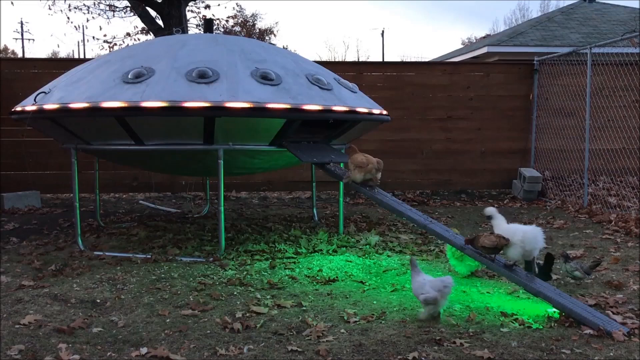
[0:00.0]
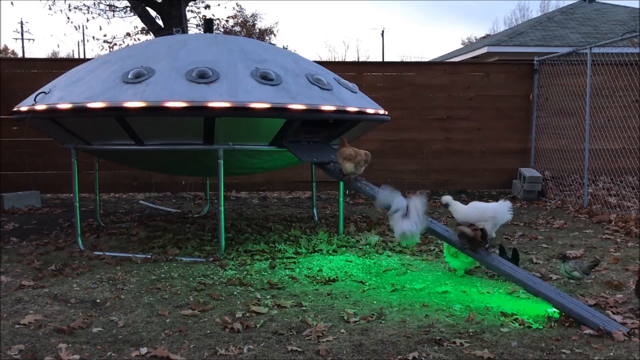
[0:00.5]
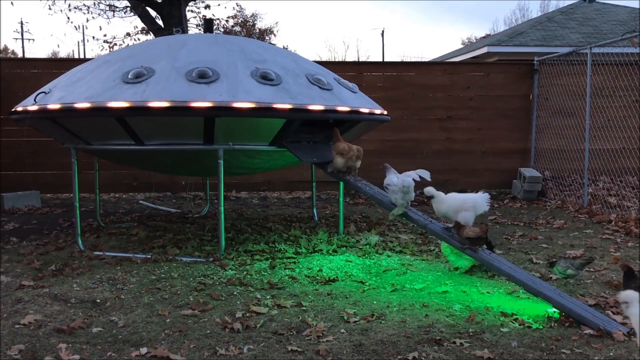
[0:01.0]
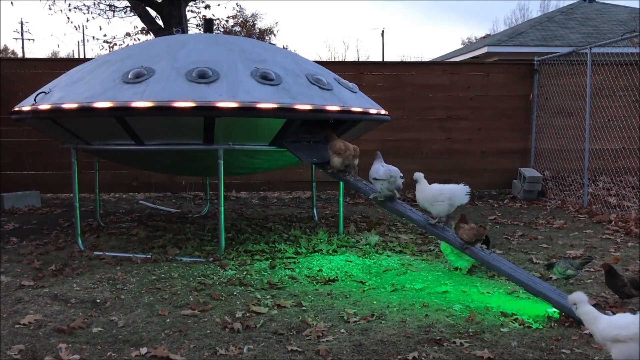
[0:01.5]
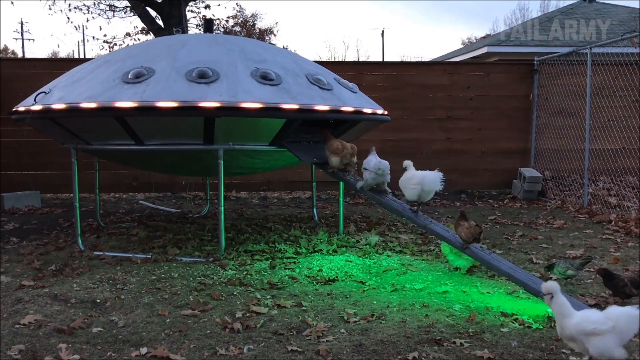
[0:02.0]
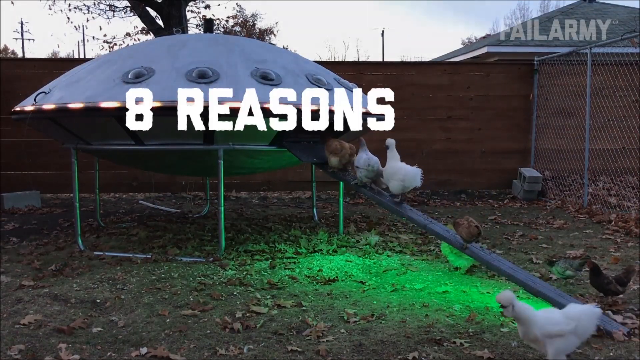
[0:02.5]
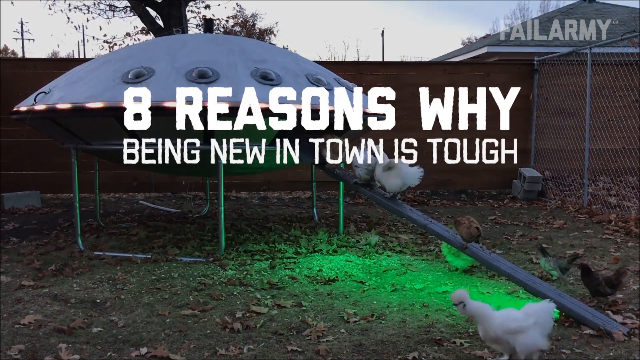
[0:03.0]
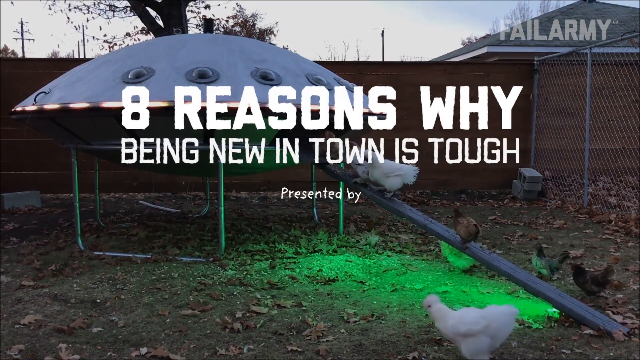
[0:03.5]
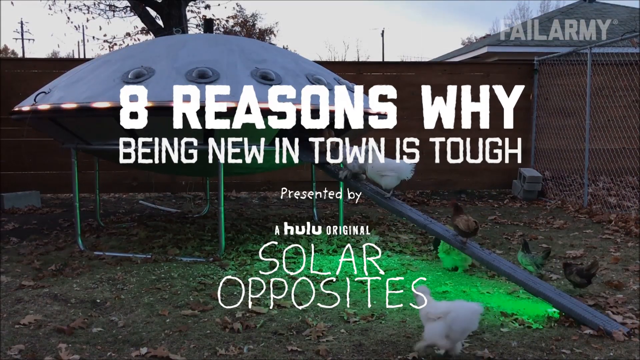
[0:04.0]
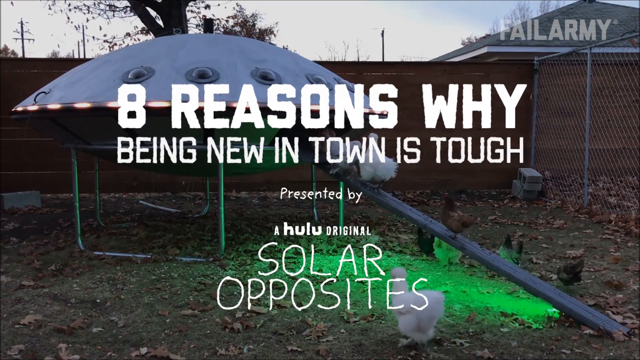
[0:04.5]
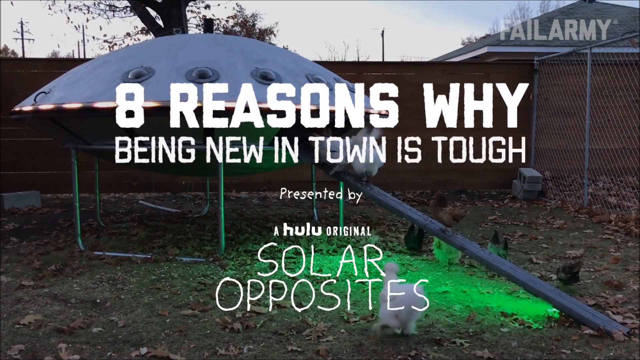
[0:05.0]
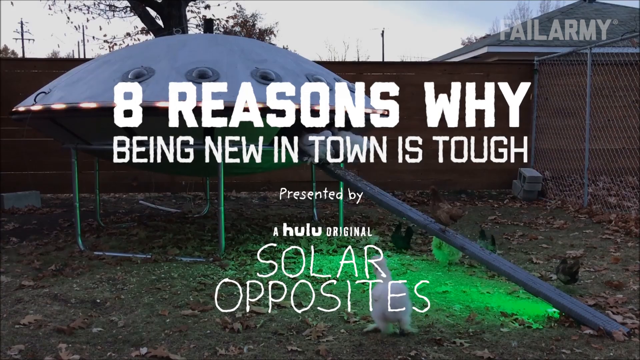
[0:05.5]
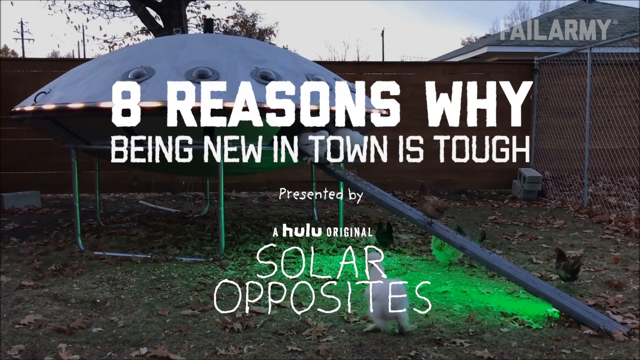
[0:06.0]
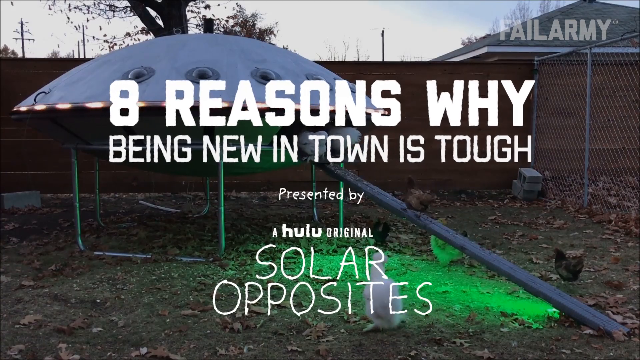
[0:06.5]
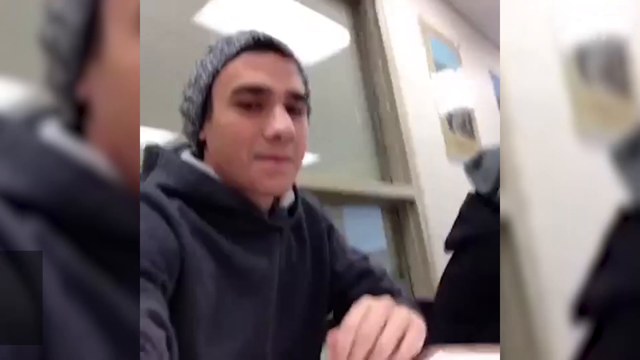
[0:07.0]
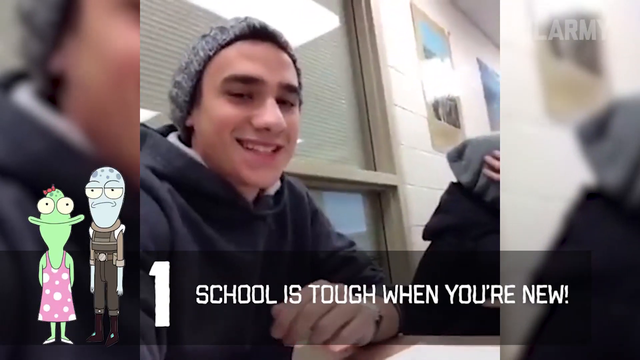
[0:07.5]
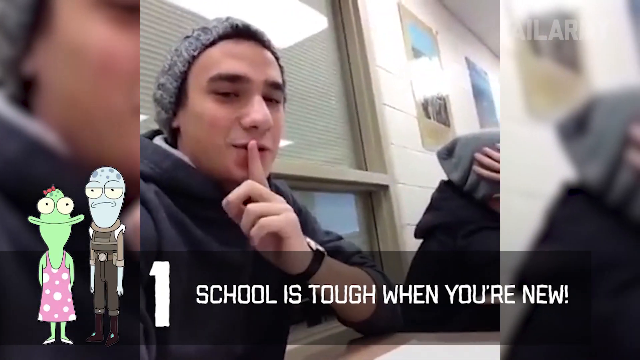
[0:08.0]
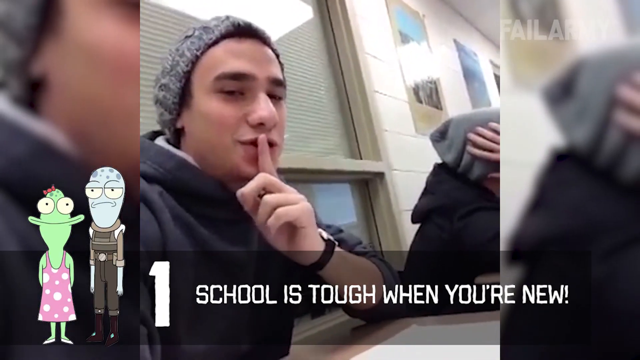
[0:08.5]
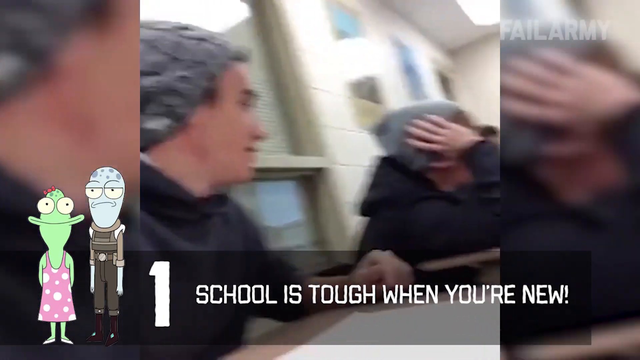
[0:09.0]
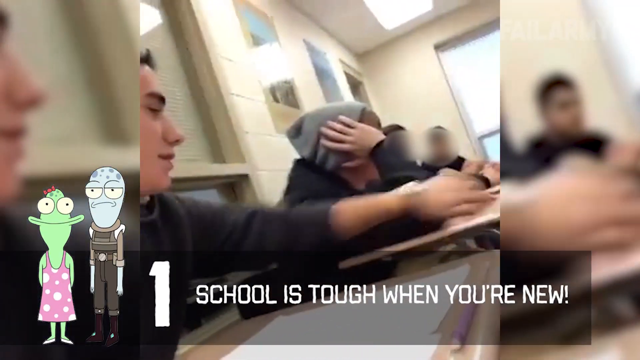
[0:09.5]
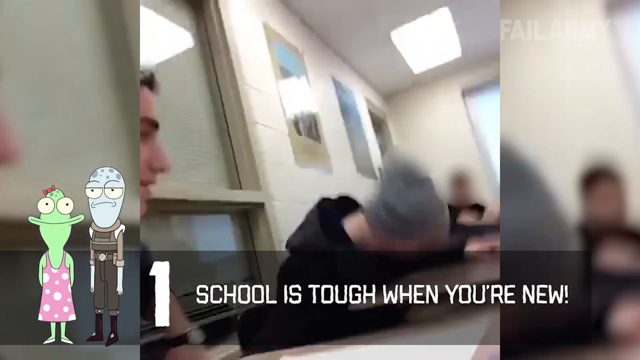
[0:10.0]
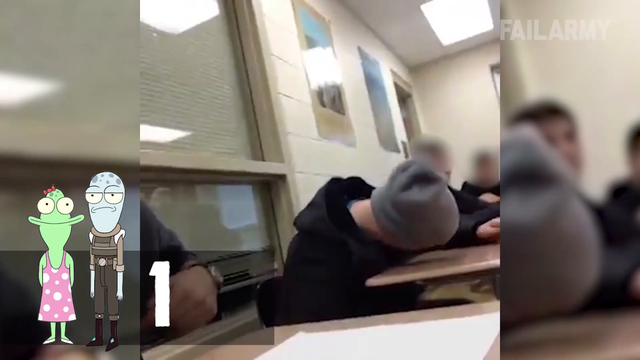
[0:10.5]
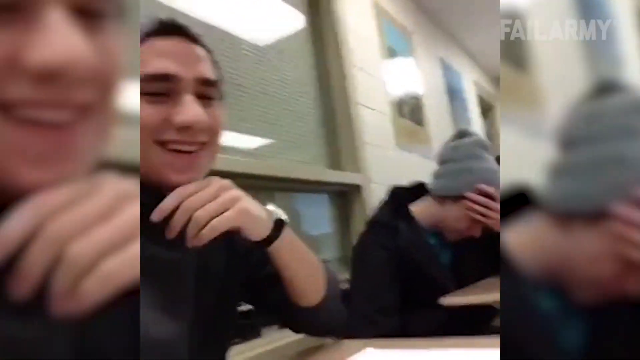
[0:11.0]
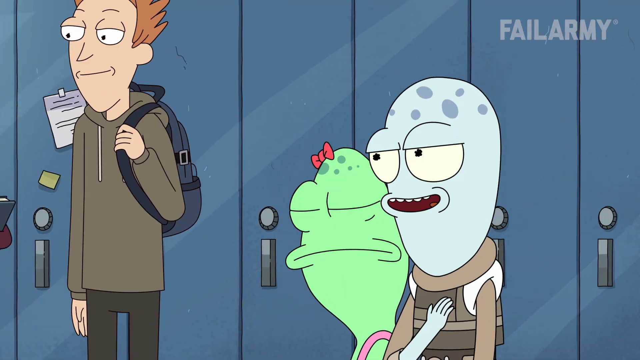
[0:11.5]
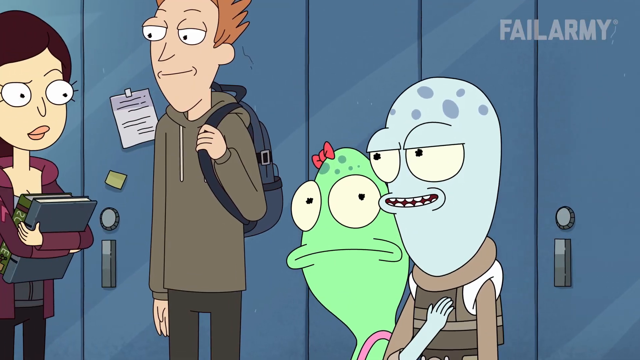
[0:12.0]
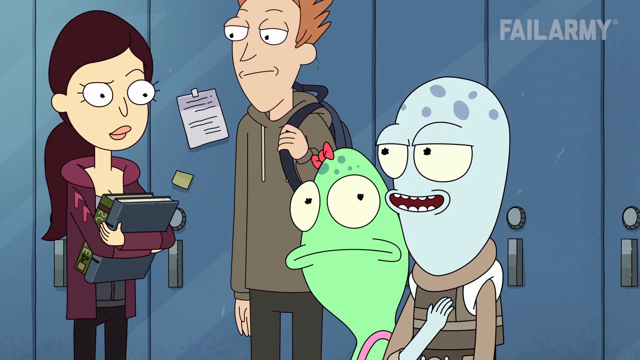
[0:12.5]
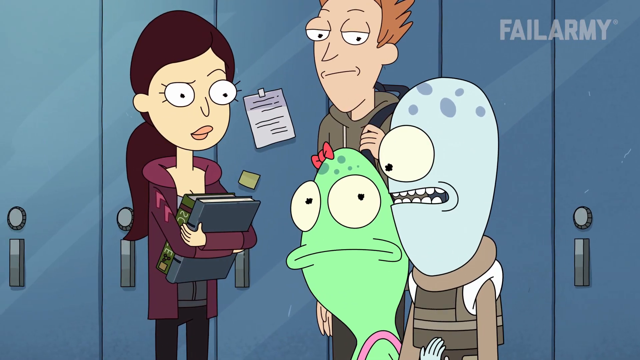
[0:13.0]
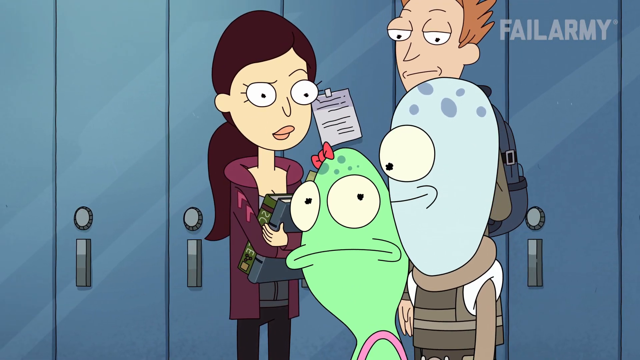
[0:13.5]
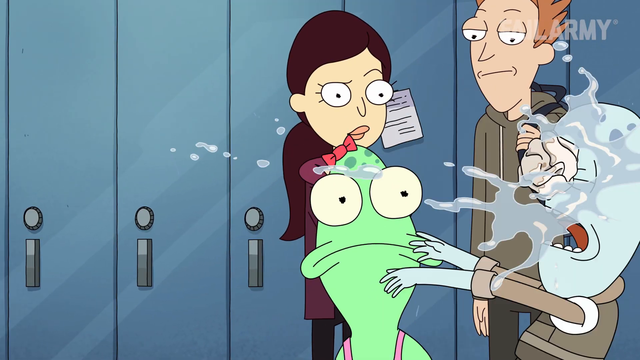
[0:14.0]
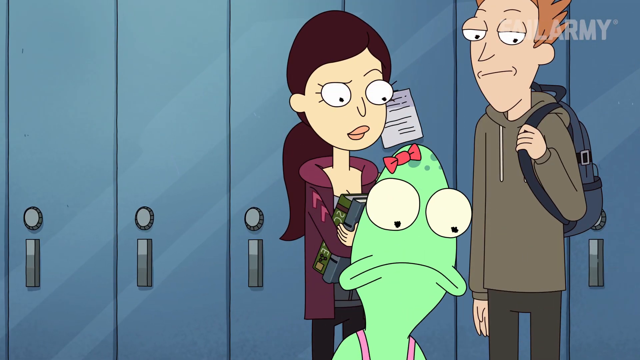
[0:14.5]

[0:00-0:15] Text reads "Eight reasons why being new in town is tough" and "A Hulu original." The video opens with what look like ducks or chickens walking up a ramp into what looks like a spaceship. The words "new in town is tough" appear. A young guy, probably a high school student, is in what looks like a classroom, possibly a cafeteria, surrounded by other people, laughing and joking around. Cartoon characters appear, and one of them seems to get slapped upside the head with something when somebody throws something at him, maybe a paper cup with some liquid in it. Back in the classroom, the young guy plays a prank on someone sitting at the desk next to him; both of the two main people wear hats. The other guy seems to be dozing or resting his head on his arm, not paying attention. While being videoed, the prankster puts his finger up in front of his lips to shush, then knocks the other kid's arm out from under his head, causing his head to fall down on the desk.